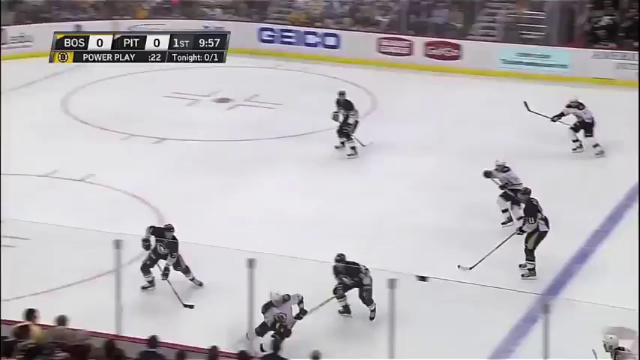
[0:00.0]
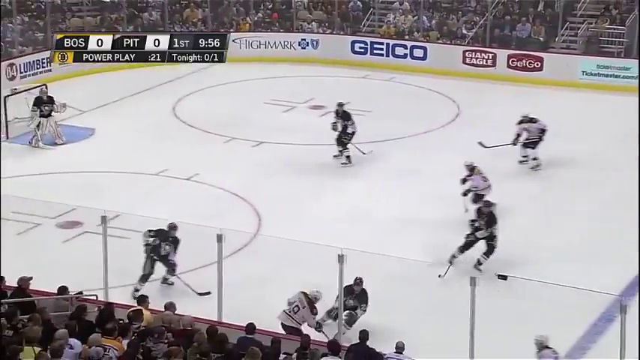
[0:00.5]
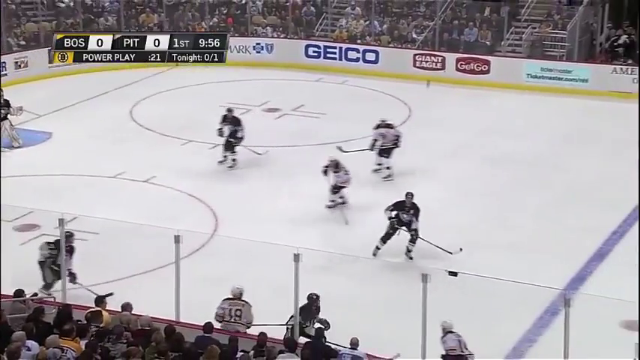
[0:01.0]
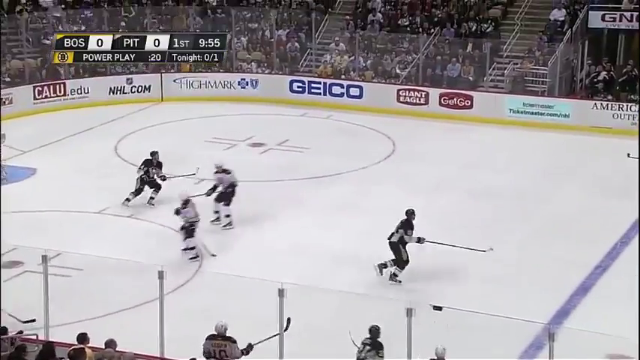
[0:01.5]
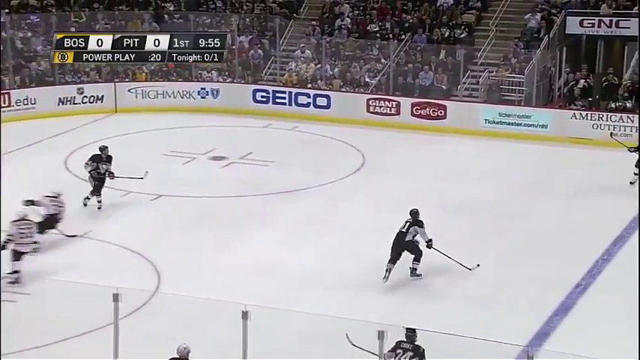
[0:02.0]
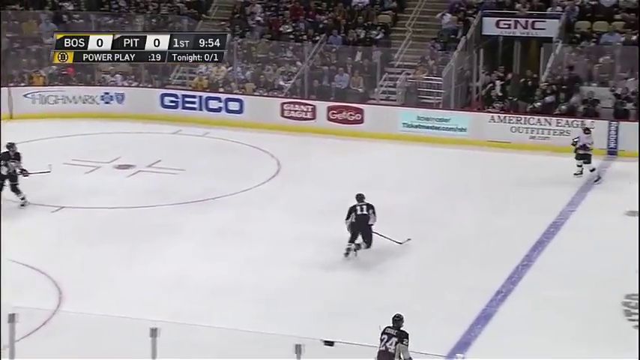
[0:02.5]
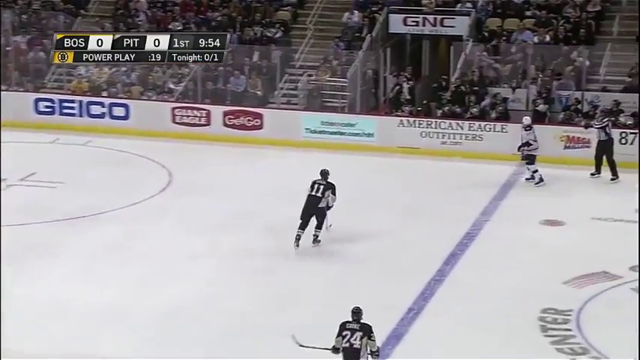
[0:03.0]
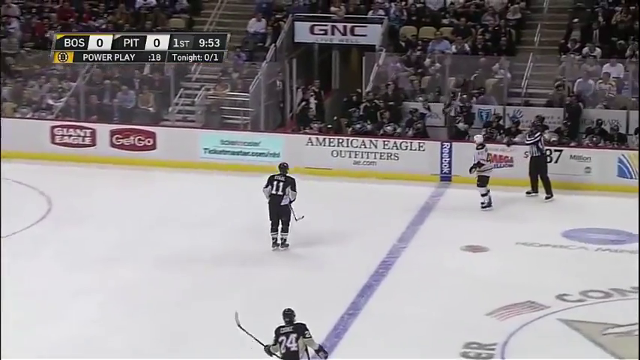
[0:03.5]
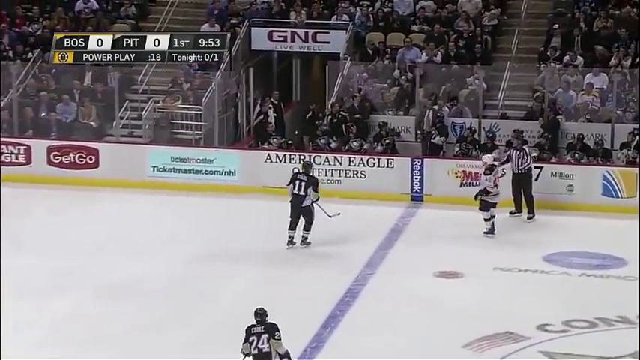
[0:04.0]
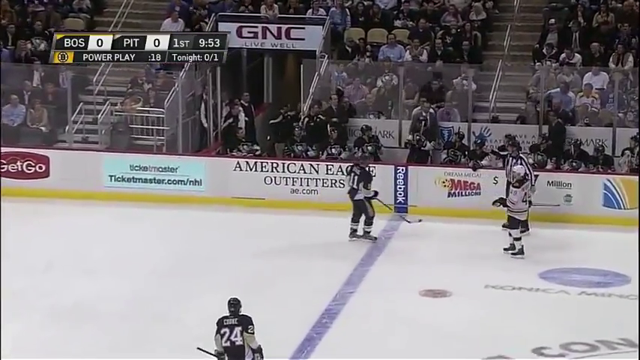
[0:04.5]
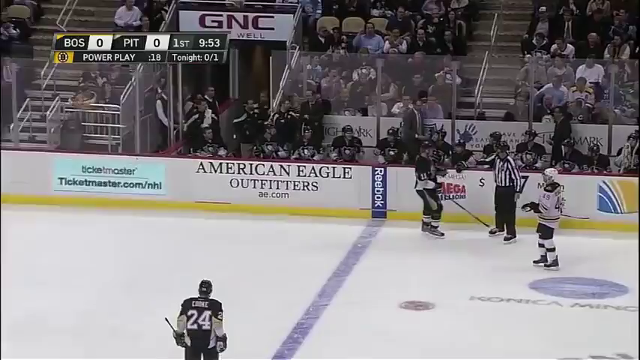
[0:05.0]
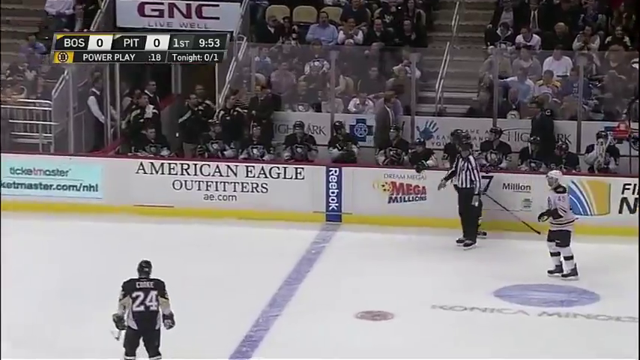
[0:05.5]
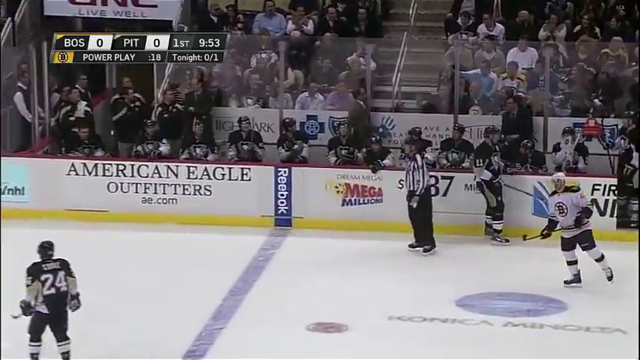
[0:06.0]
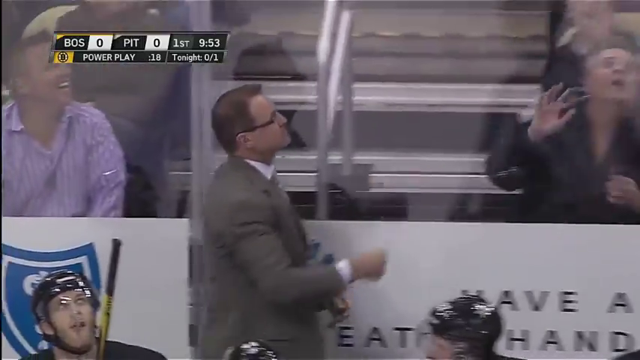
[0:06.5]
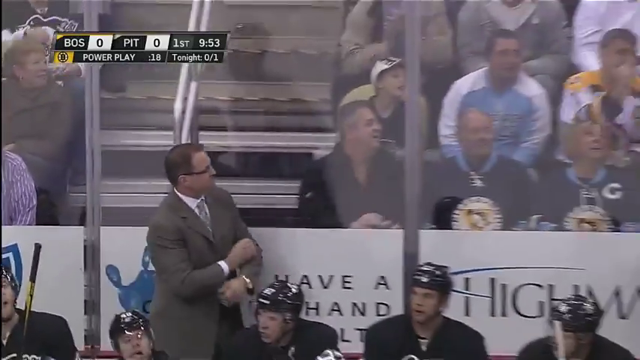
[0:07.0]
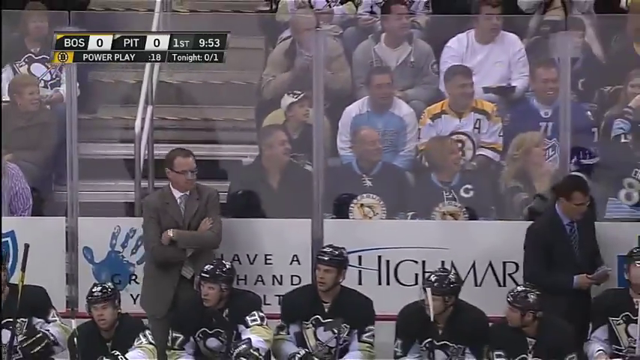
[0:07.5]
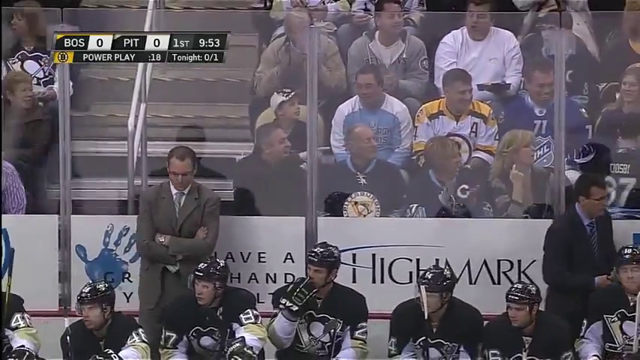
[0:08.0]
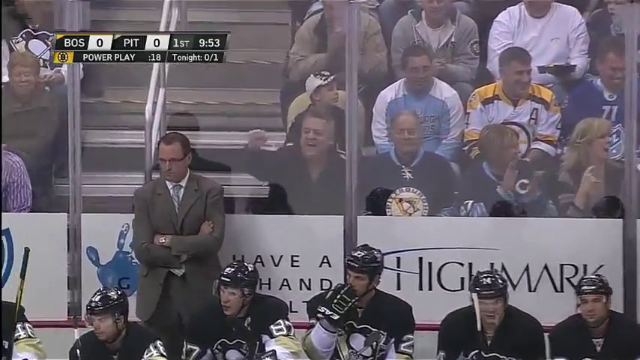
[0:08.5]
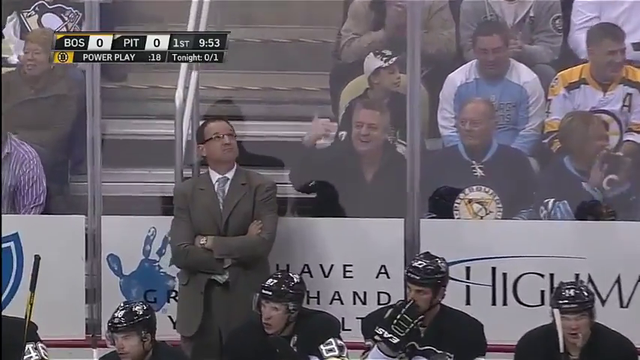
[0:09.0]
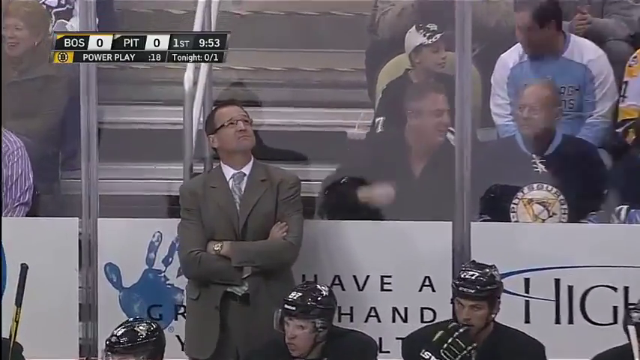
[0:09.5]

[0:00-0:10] The video is from what appears to be an NHL professional hockey game between the Boston Bruins and the Pittsburgh Penguins, shown in live action. The Penguins wear dark jerseys and dark pants, while the Bruins wear white jerseys and black pants. The shot cuts to the Penguins coach, who appears unhappy or distraught. There are no goals or fights; Boston has the puck and is passing it around.